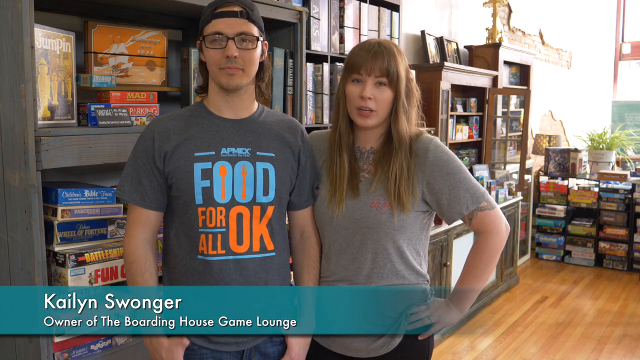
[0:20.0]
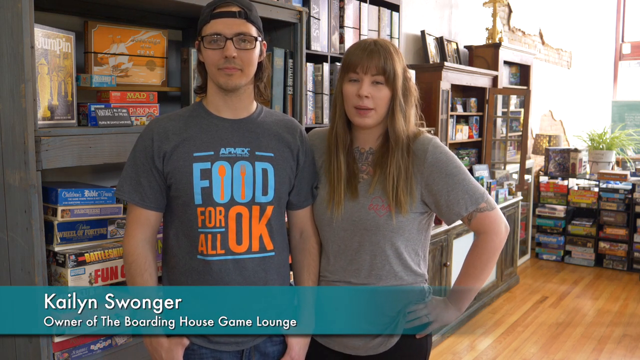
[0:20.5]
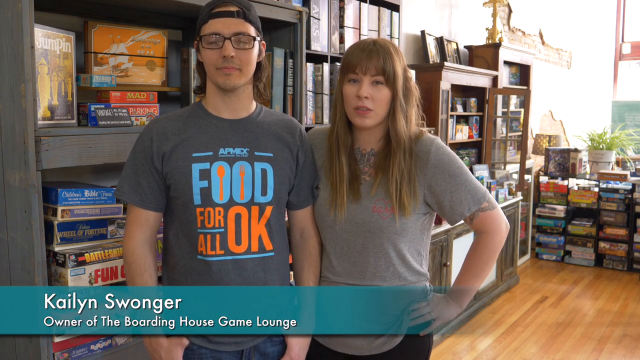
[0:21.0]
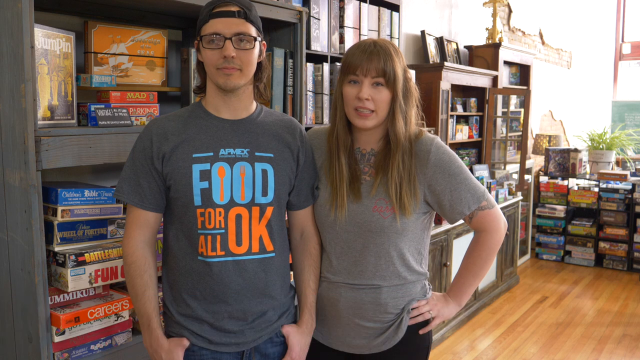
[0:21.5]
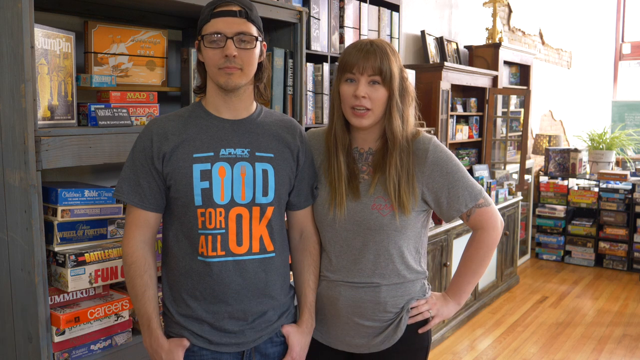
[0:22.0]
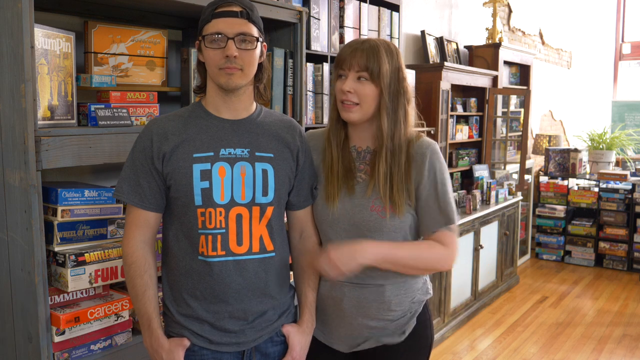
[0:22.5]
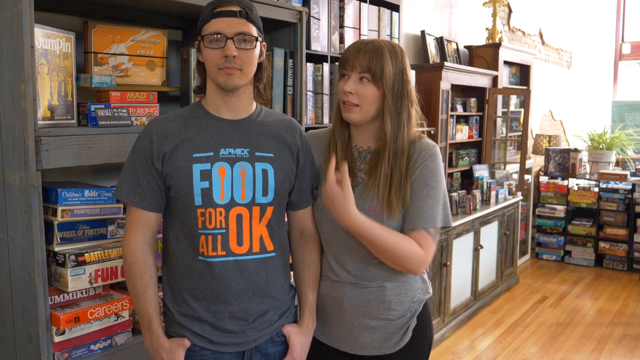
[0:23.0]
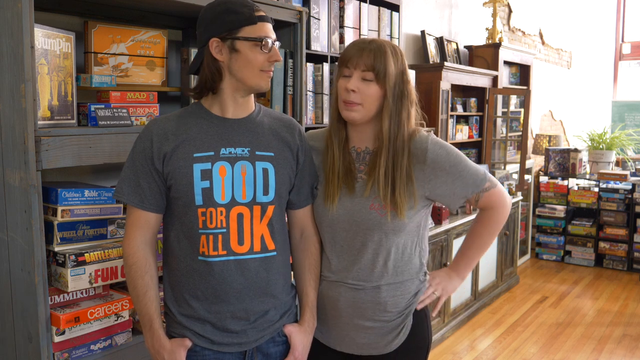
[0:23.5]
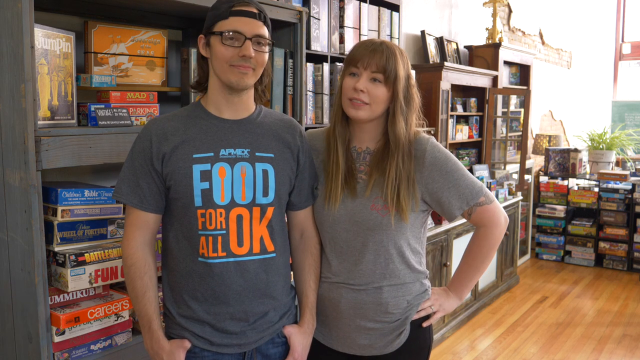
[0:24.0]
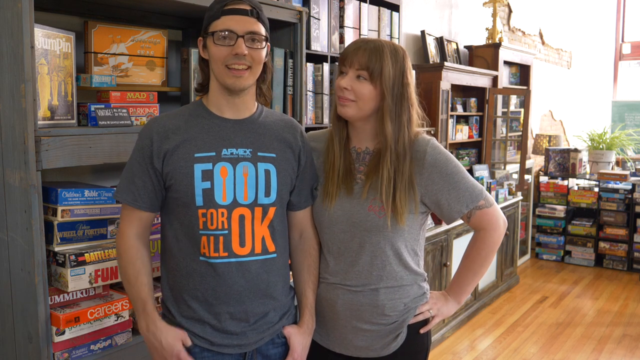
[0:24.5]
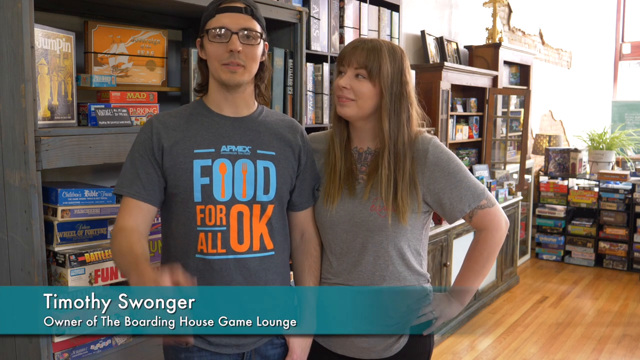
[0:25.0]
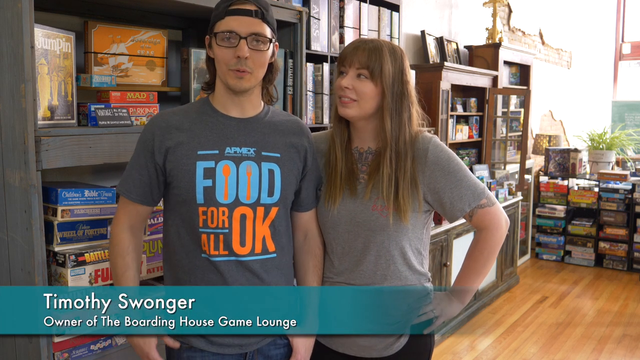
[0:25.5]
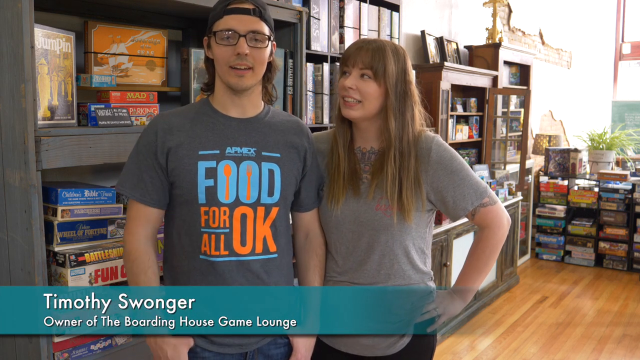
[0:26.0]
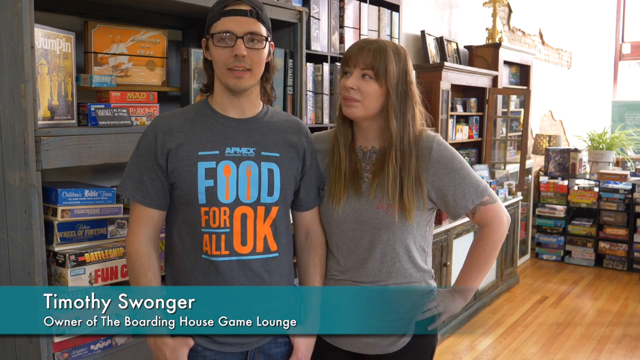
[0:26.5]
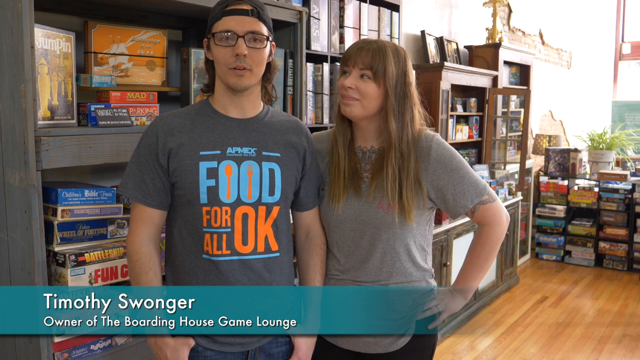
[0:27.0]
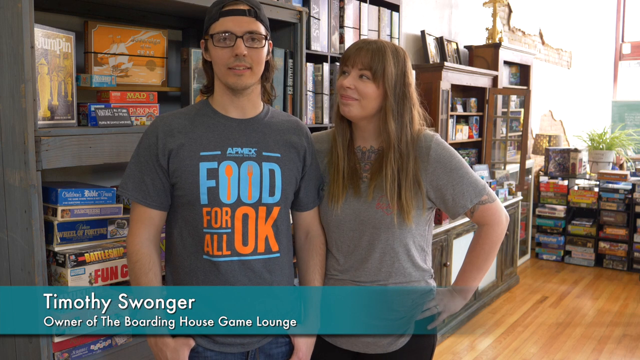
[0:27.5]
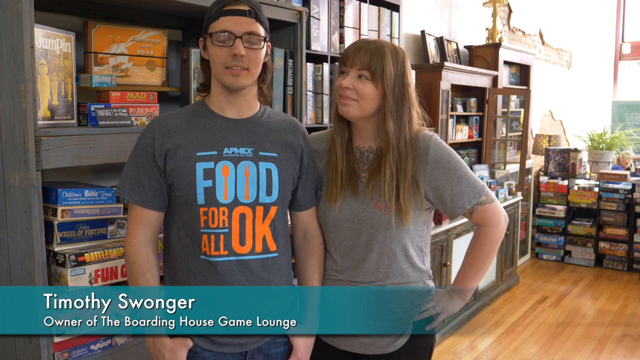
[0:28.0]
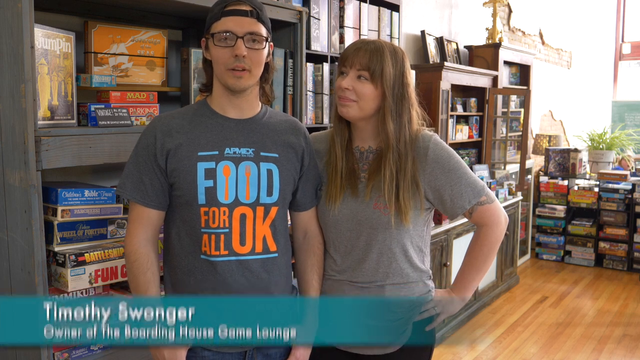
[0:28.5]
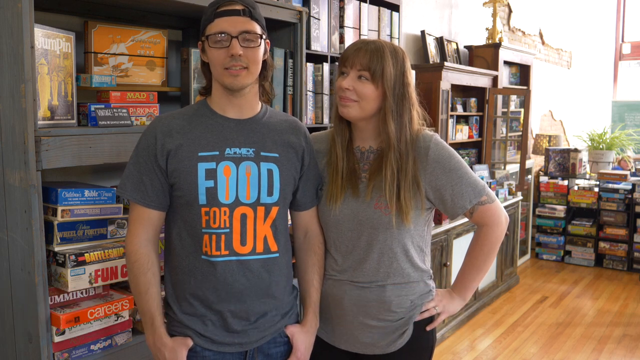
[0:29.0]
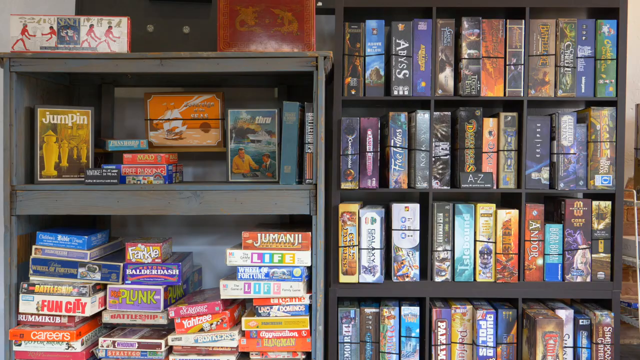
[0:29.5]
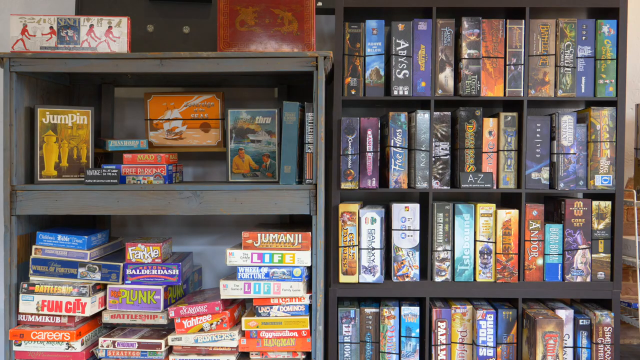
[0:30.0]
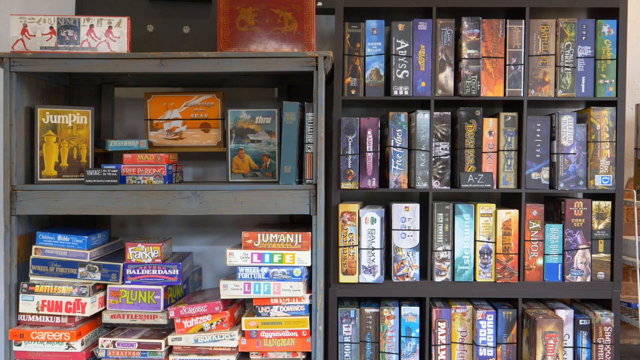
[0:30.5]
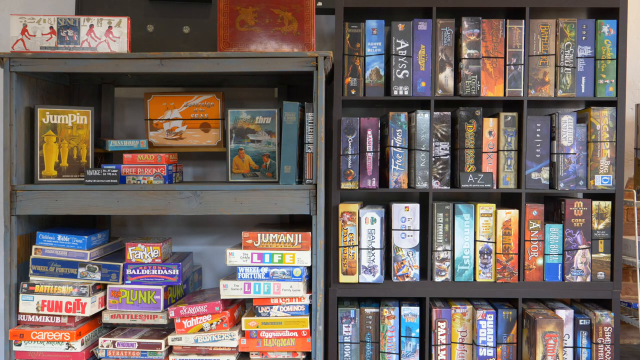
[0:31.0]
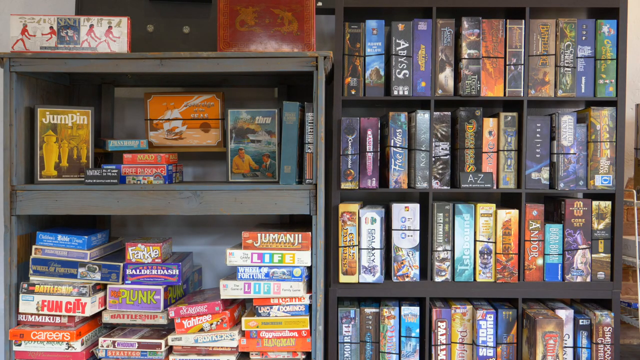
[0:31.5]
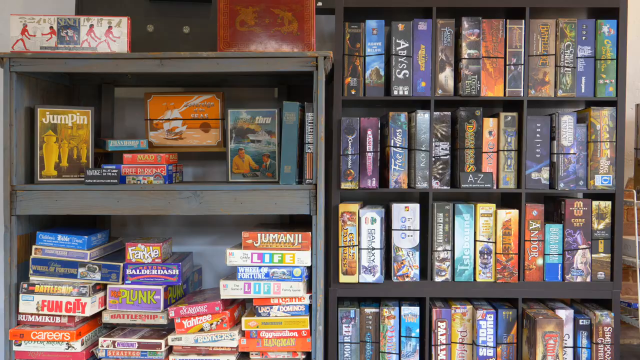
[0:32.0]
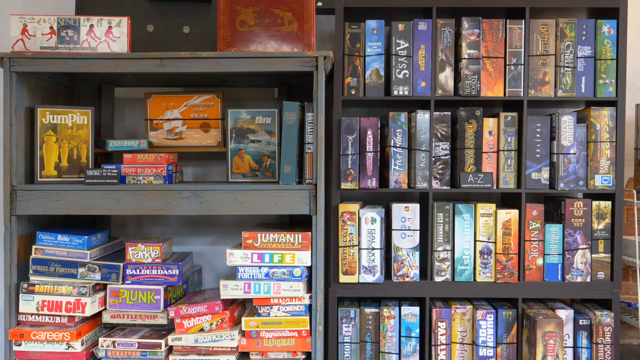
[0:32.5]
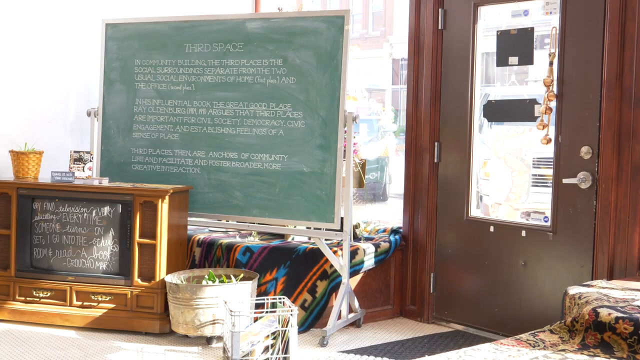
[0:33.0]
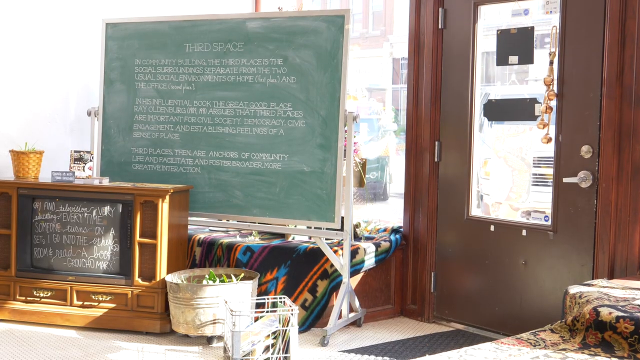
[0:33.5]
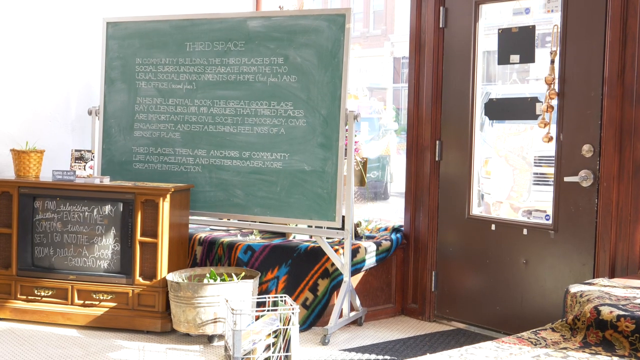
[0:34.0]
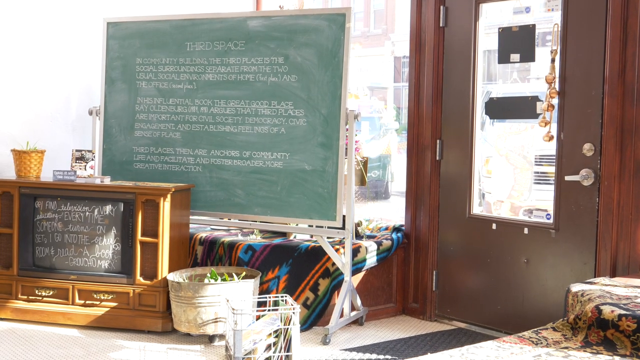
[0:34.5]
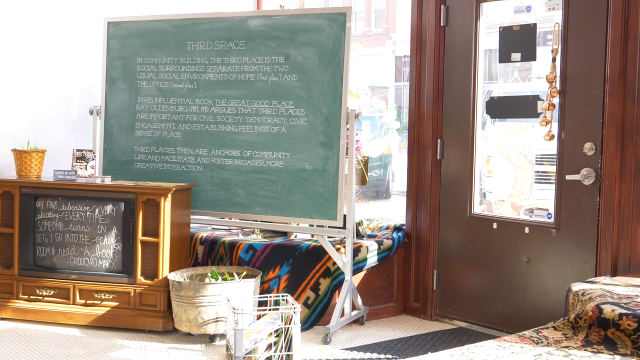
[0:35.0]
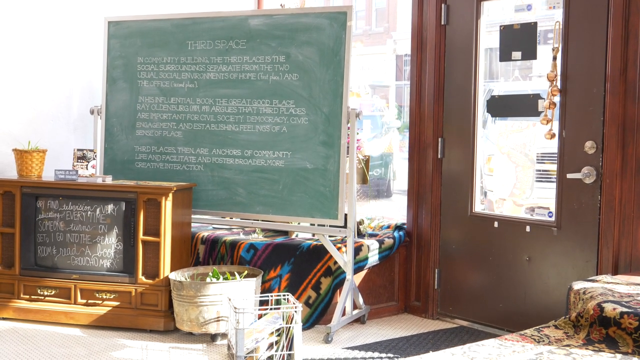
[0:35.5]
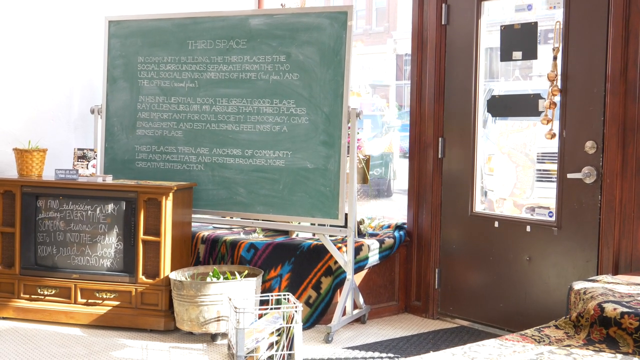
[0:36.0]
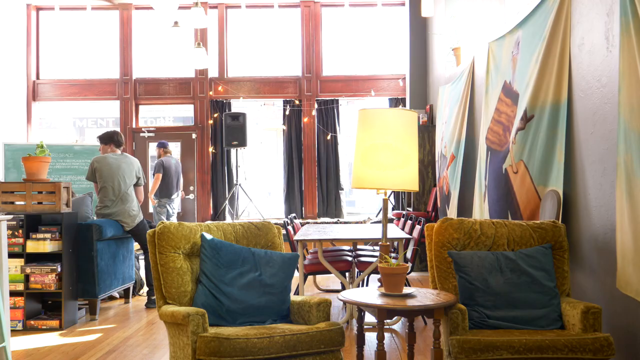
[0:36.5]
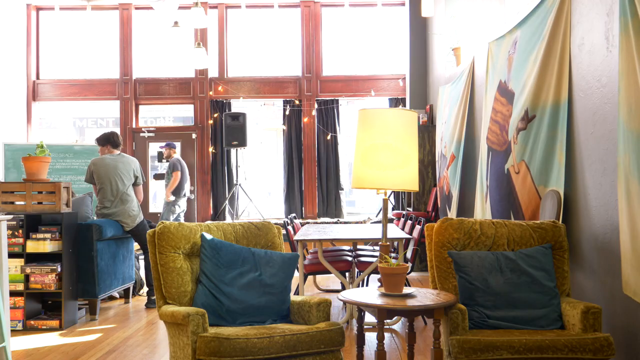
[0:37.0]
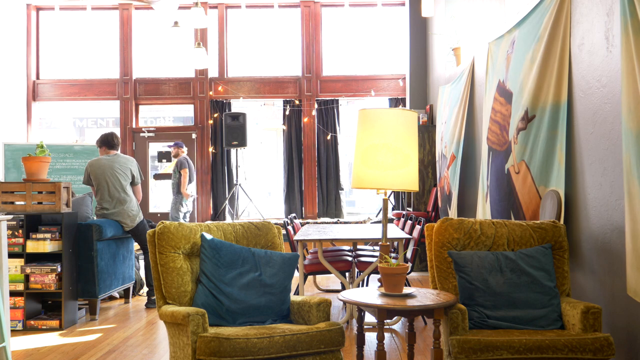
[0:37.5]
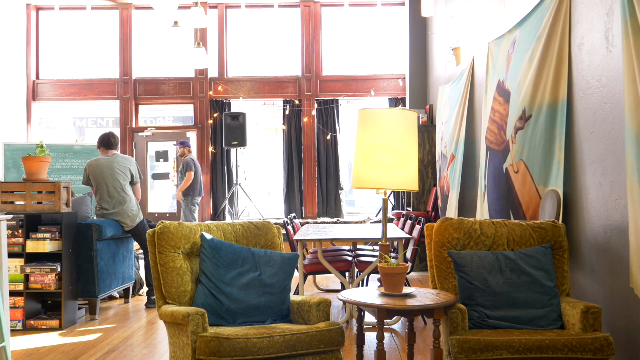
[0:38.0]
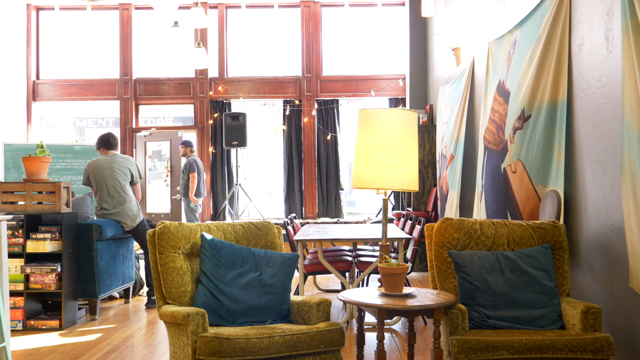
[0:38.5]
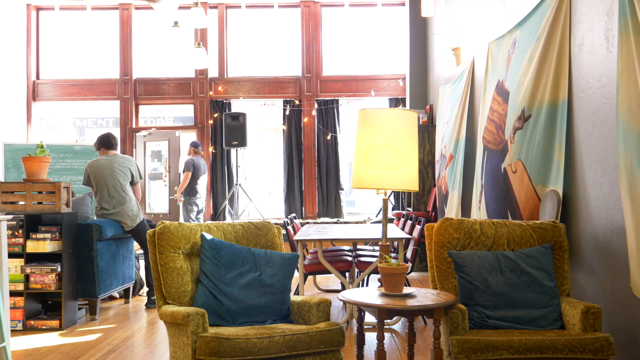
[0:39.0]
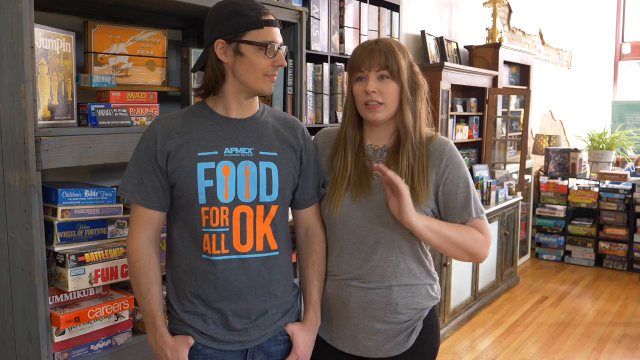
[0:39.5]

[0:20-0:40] Two people stand upright, talking. On the left is a man in a dark charcoal gray t-shirt that says "Food for All, OK?", a dad cap turned backwards, and rectangle-framed glasses. Next to him is a white woman with light to medium brown hair with blonde streaks. Behind them, some books or board games are on a grayish-brown shelf. The woman looks over at the man while speaking, lifts her left hand and gestures, pointing at him; he turns to her, nods in acknowledgment, and raises his right hand to wave to the camera, so she appears to be introducing him. A banner below shows the name Timothy Swonger and reads "Owner of the Boarding House Game Lounge". He begins speaking and the banner disappears. The scene cuts to a collection of board games on shelves in a storage area, then to another space holding old-school and antique items such as a floor model TV, a green chalkboard with writing on it, and an old door to the right. Then the scene cuts to the front entrance area.